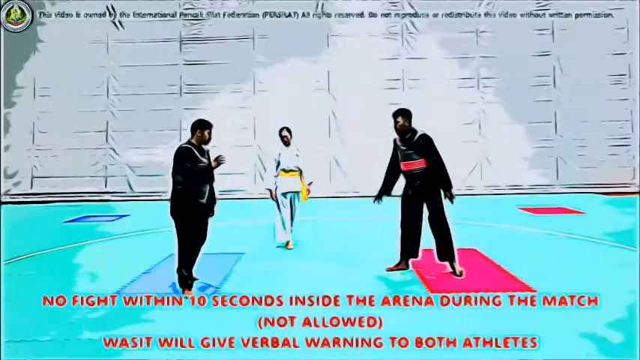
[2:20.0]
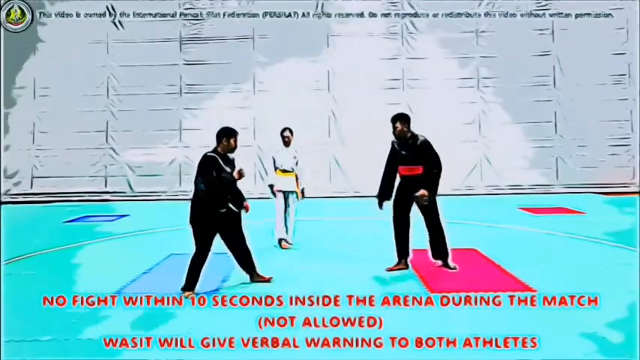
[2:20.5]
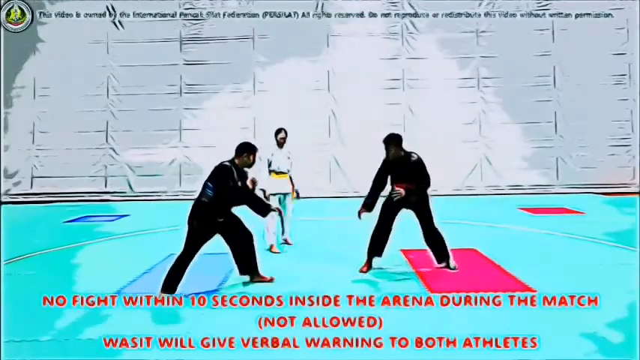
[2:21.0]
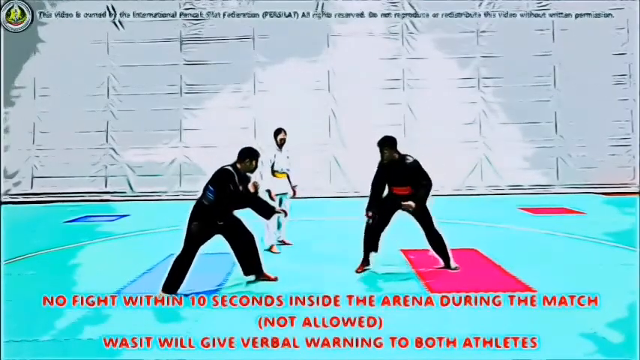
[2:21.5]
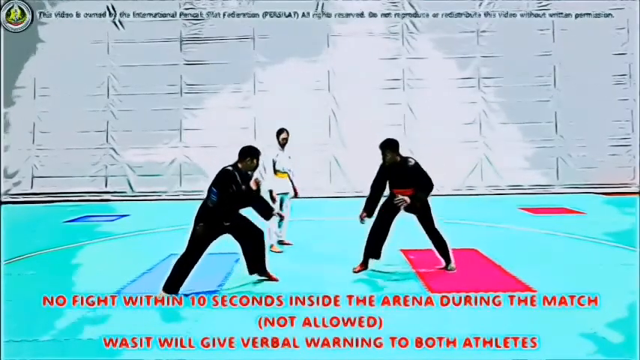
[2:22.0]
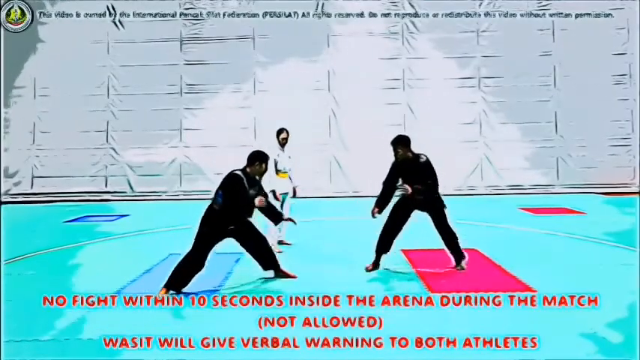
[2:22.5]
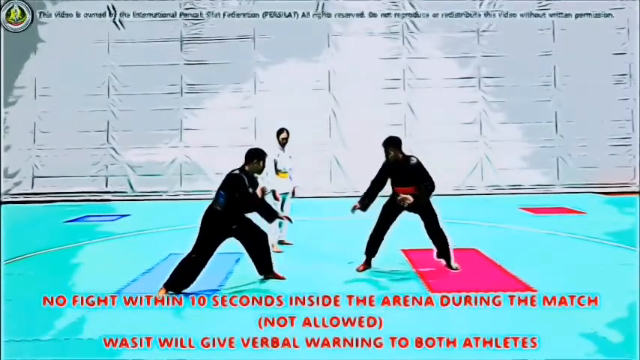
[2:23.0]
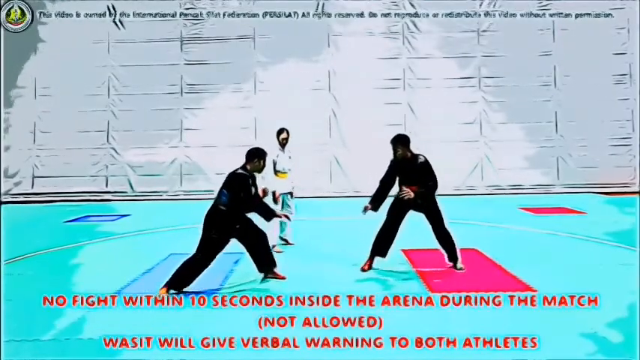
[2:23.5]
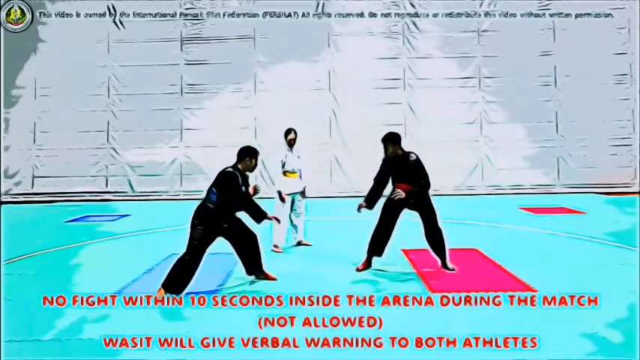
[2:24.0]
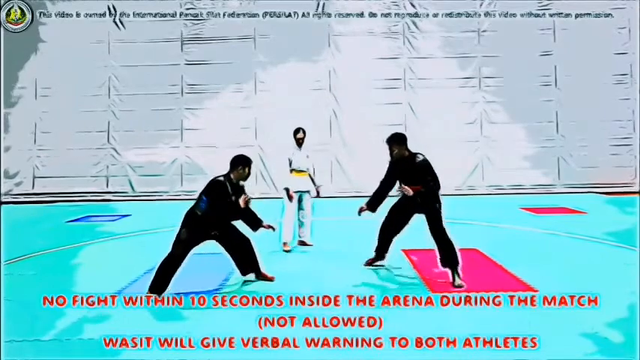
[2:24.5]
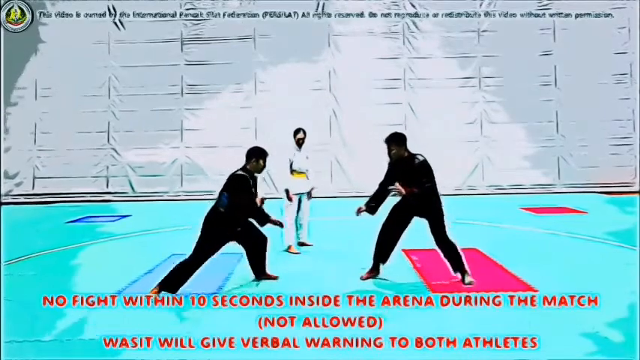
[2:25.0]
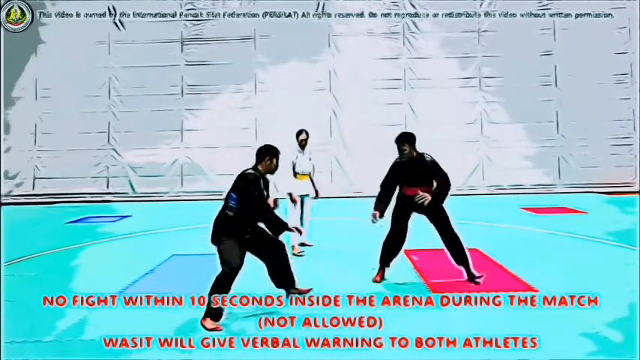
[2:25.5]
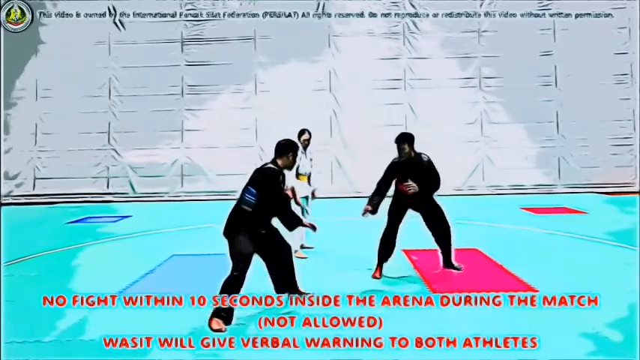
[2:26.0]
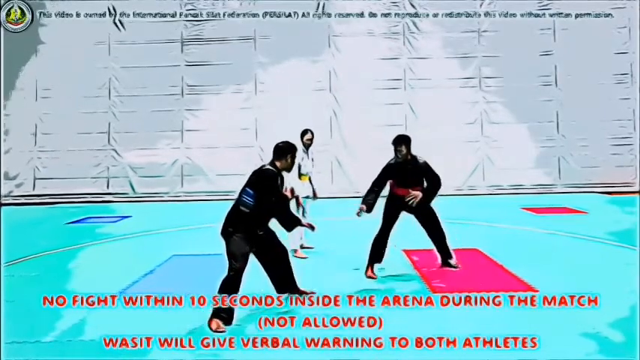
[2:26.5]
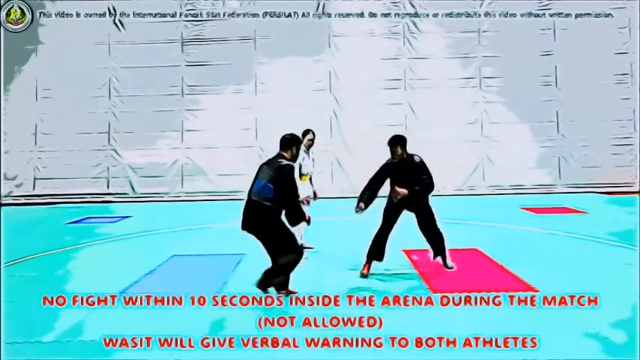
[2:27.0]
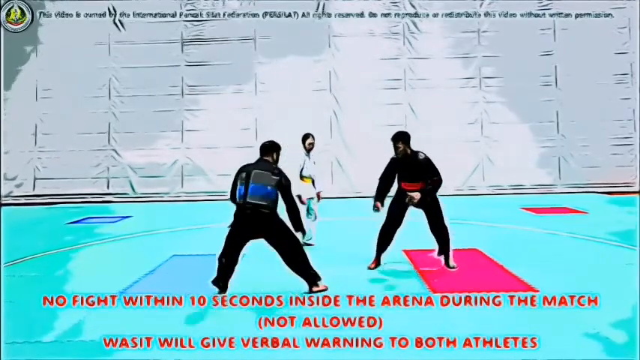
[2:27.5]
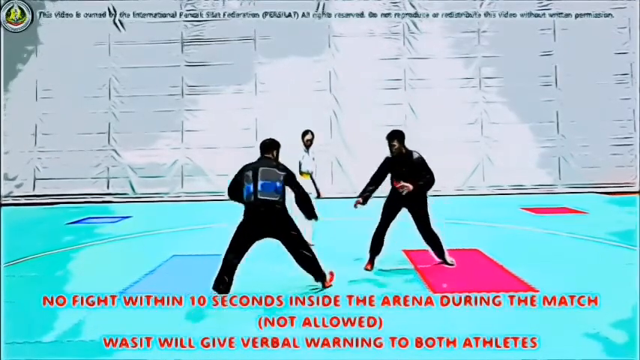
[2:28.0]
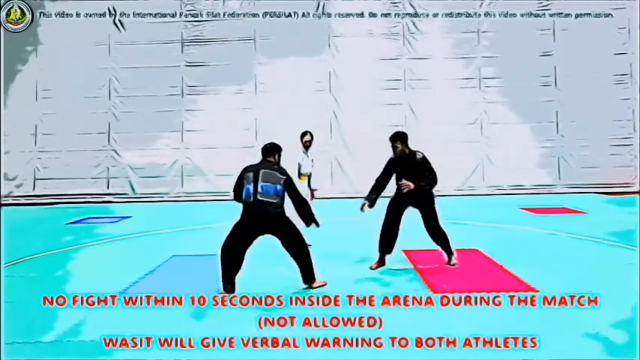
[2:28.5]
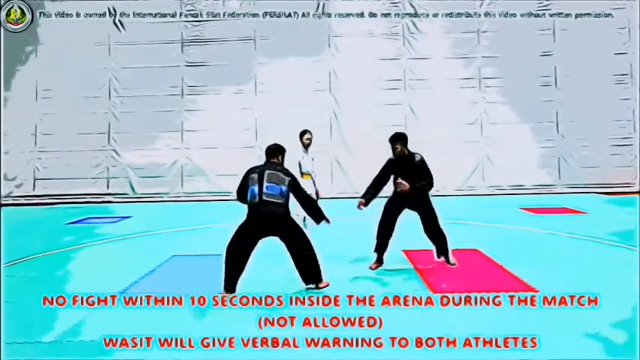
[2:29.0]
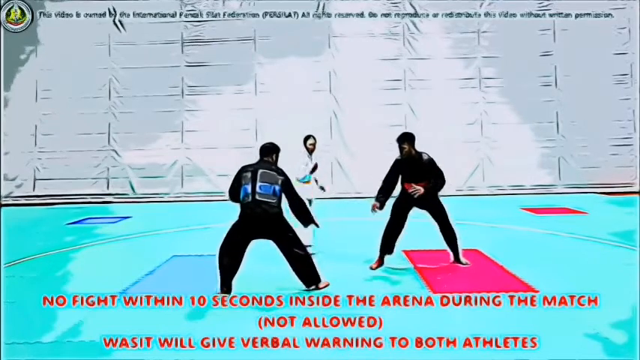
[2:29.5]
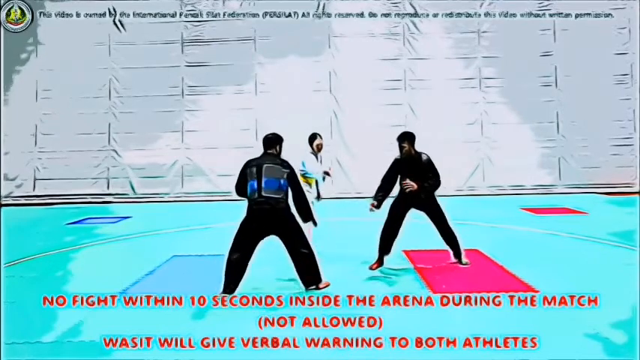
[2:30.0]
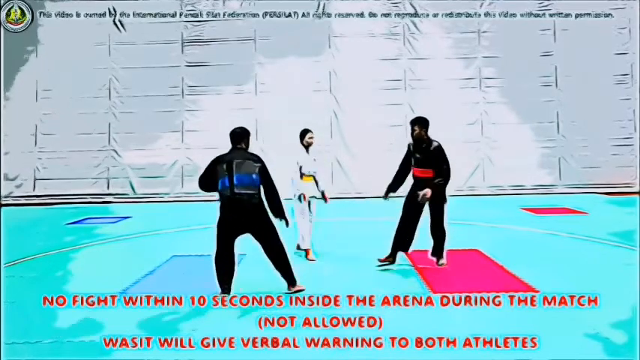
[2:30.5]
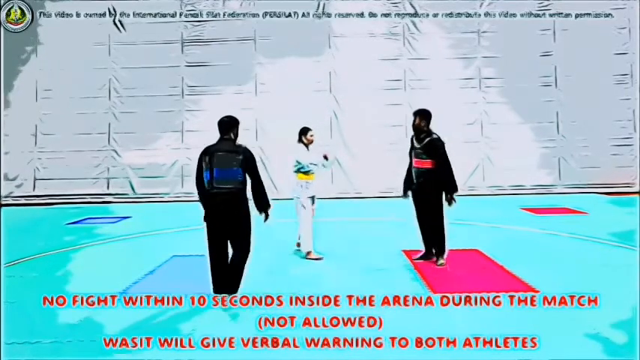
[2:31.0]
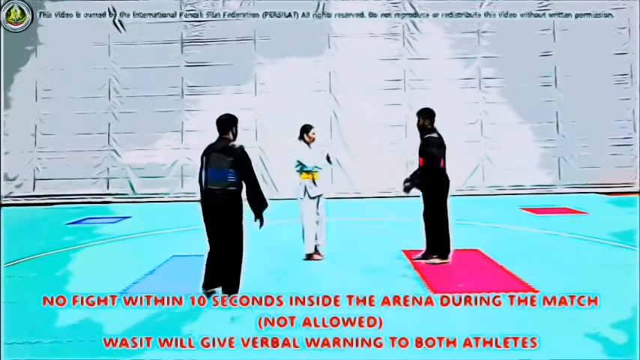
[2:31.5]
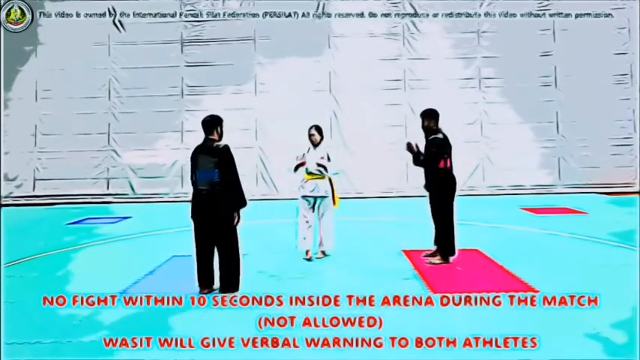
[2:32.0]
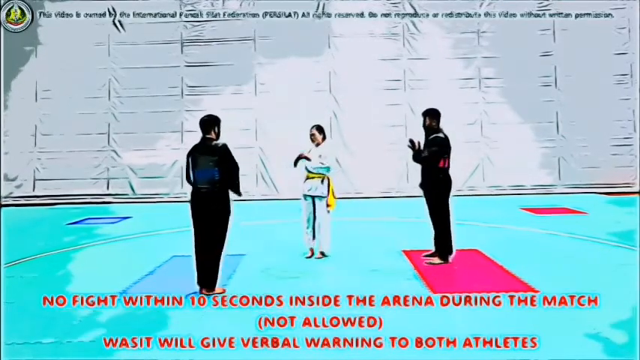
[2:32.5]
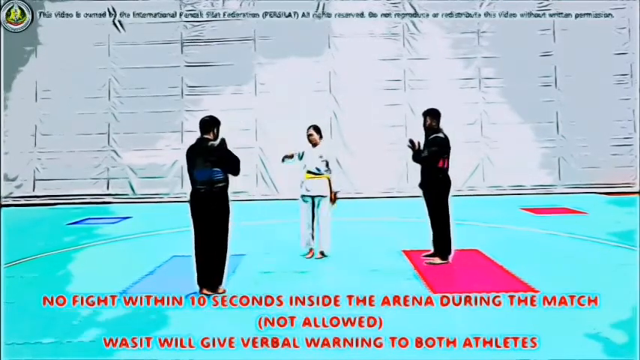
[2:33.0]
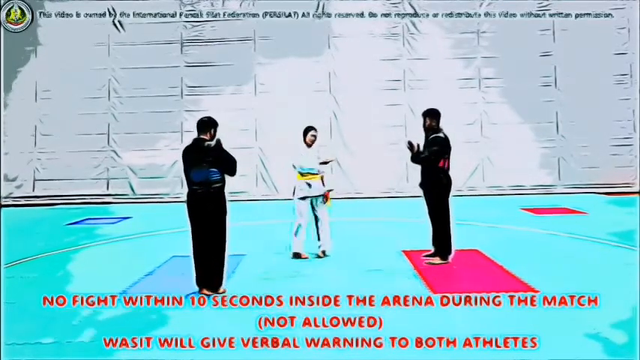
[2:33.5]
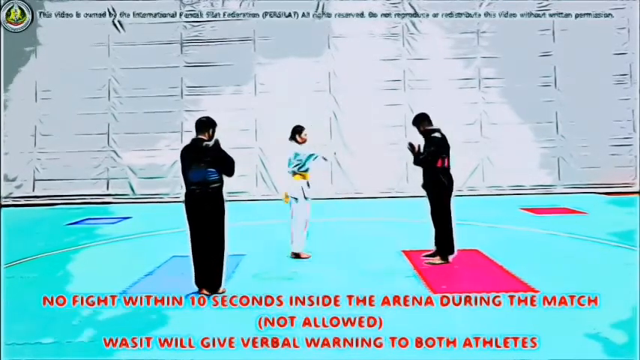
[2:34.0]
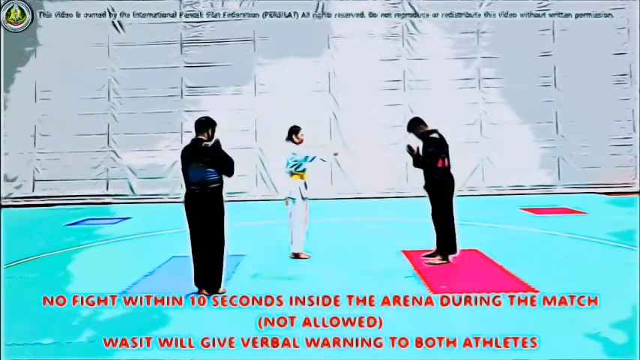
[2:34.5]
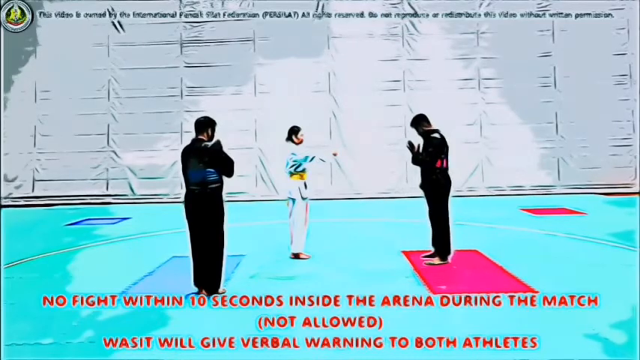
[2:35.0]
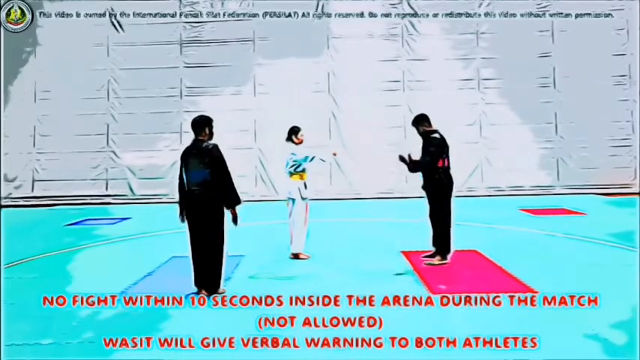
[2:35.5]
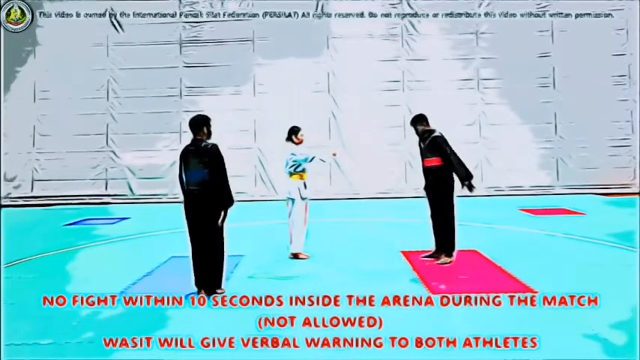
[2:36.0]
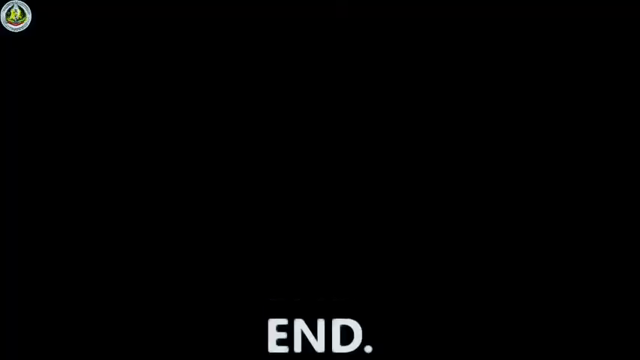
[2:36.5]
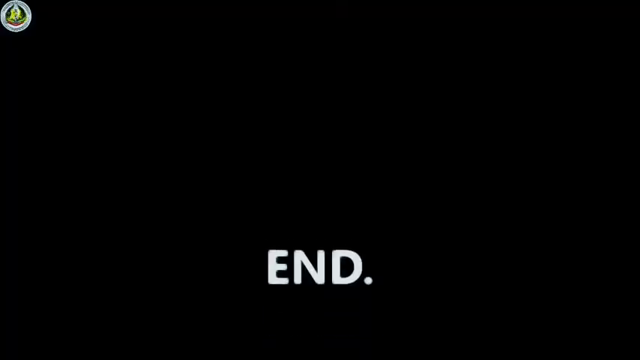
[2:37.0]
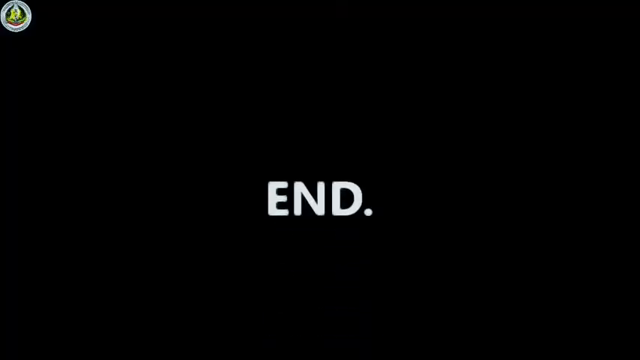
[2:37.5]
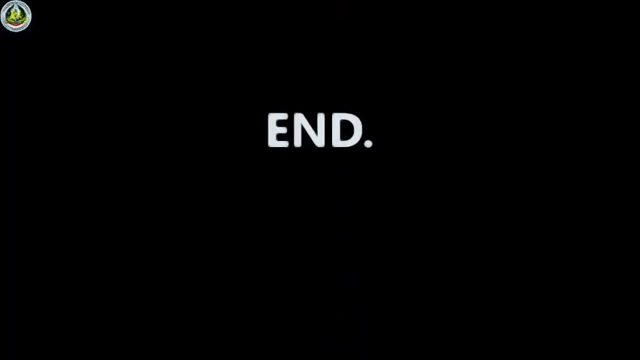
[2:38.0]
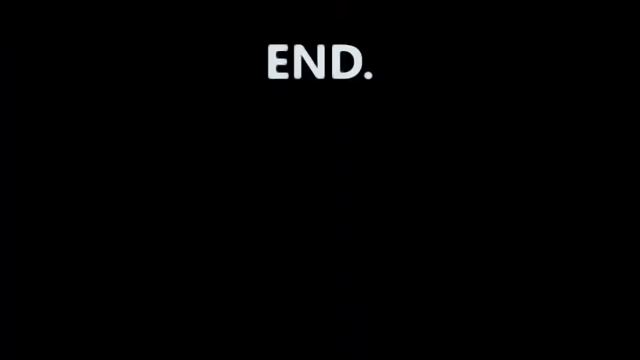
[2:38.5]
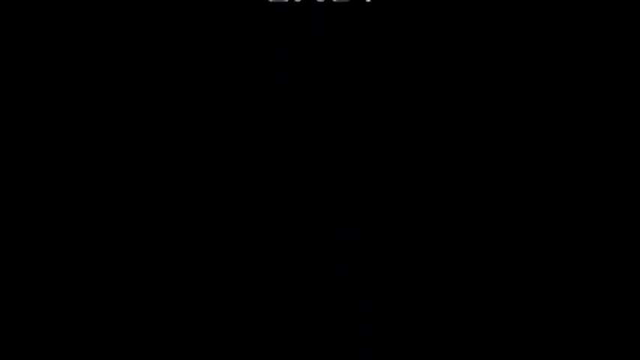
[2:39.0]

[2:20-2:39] Text reads "no fight within 10 seconds inside the arena during the match" and states that the Wassup will give a verbal warning to both athletes. A big grayish white wall is behind the arena, and the arena has a circle in it that looks to be about 20 to 25 feet in diameter. There are two contestants: one athlete wears a blue belt and the other a red belt. Another person, apparently the referee, is also present.